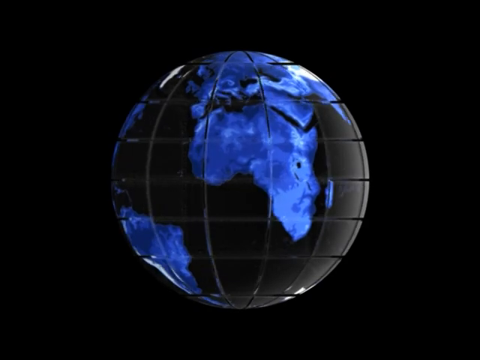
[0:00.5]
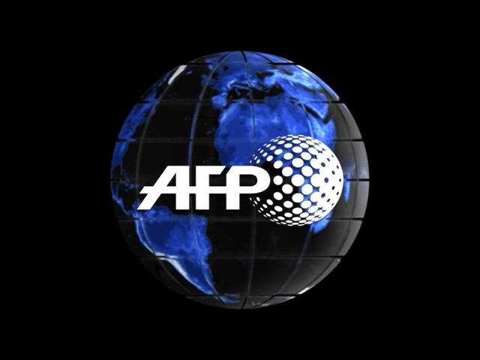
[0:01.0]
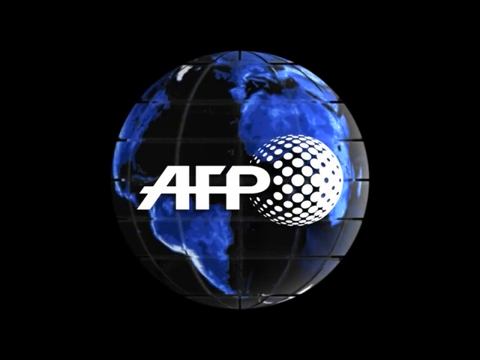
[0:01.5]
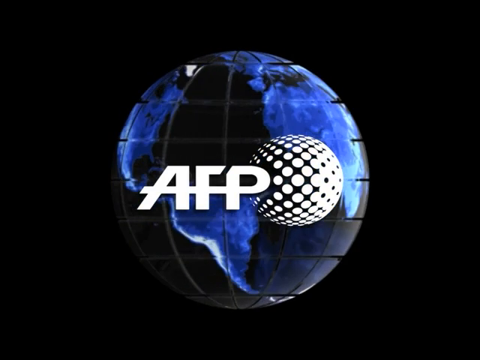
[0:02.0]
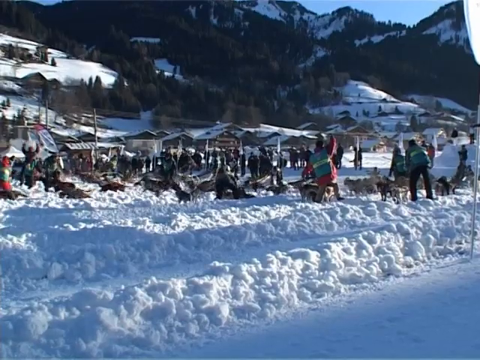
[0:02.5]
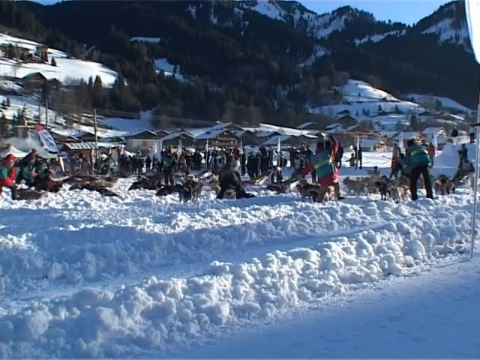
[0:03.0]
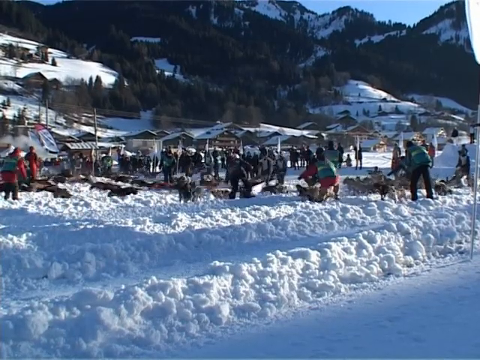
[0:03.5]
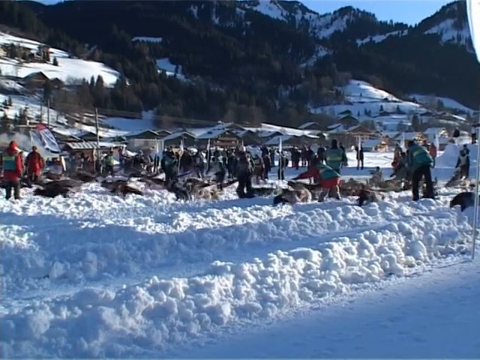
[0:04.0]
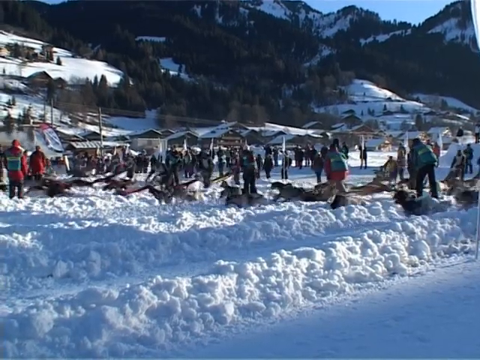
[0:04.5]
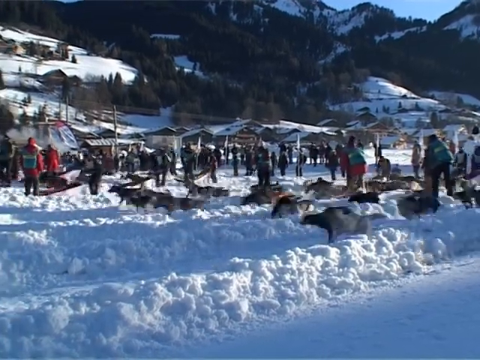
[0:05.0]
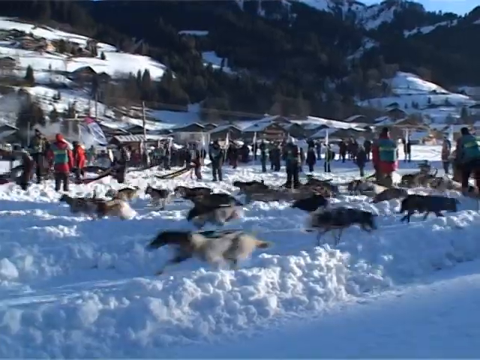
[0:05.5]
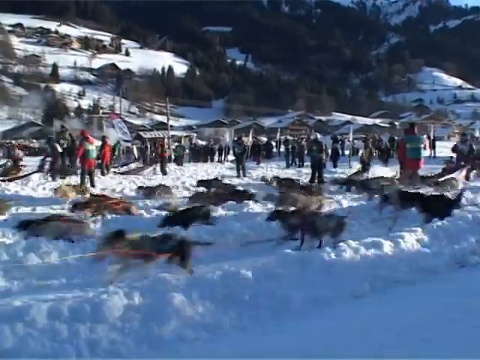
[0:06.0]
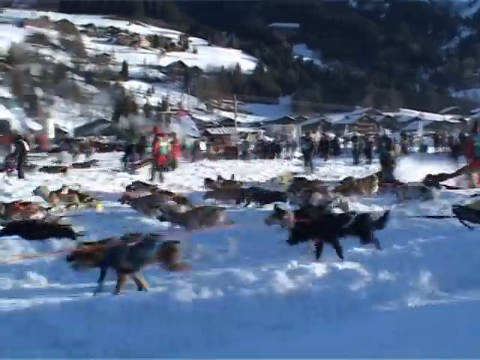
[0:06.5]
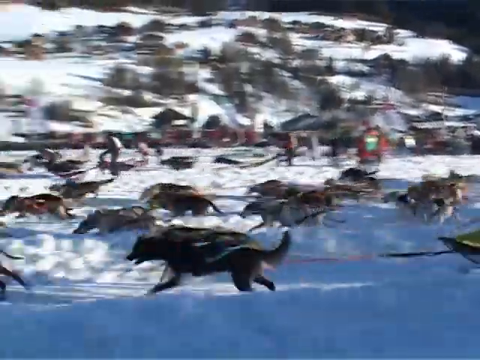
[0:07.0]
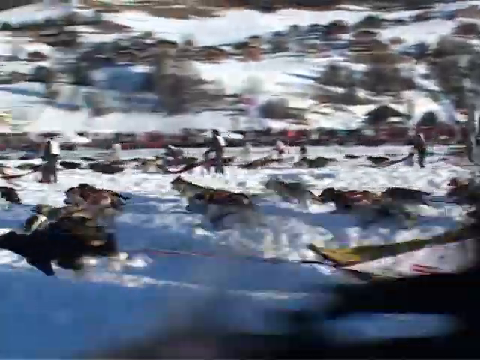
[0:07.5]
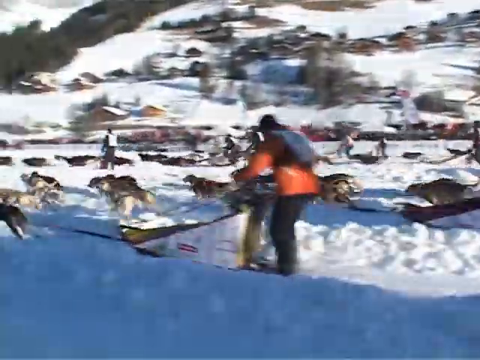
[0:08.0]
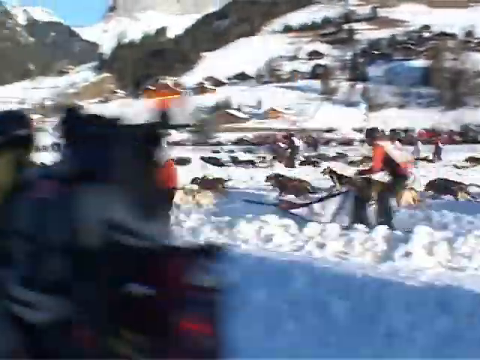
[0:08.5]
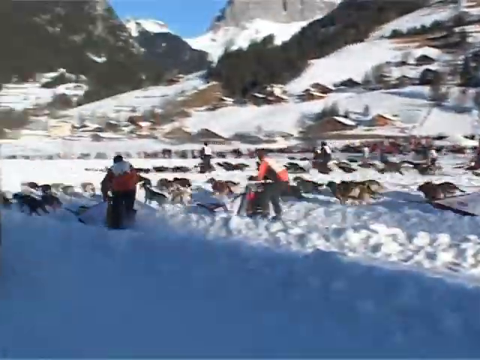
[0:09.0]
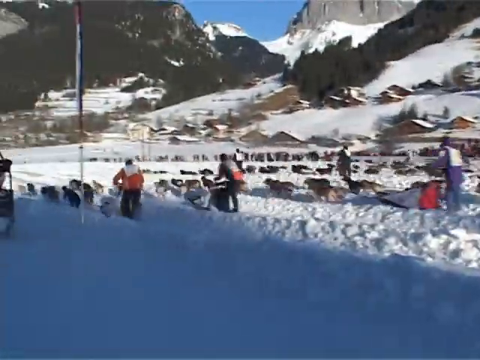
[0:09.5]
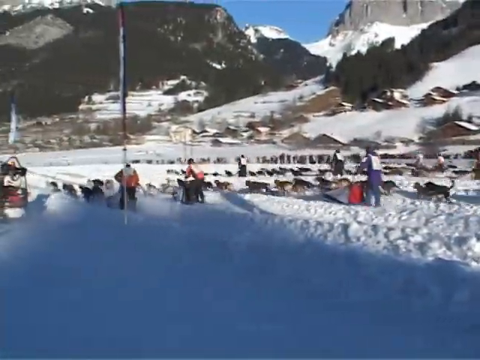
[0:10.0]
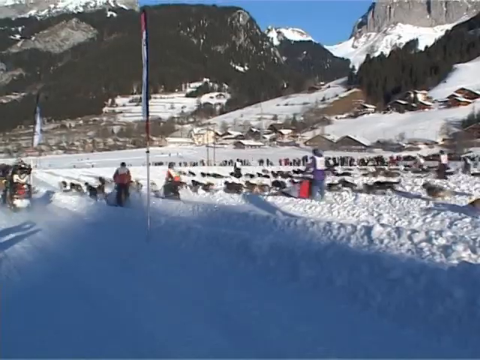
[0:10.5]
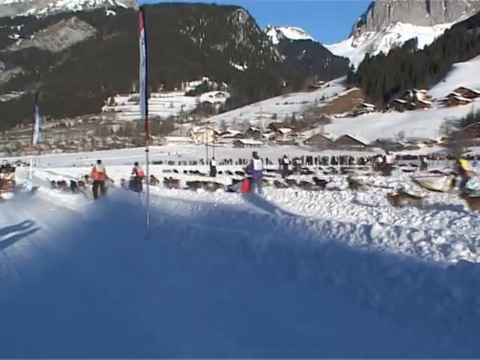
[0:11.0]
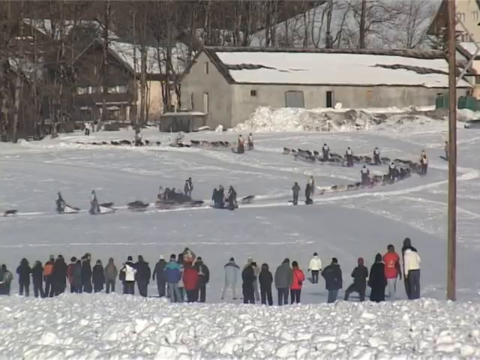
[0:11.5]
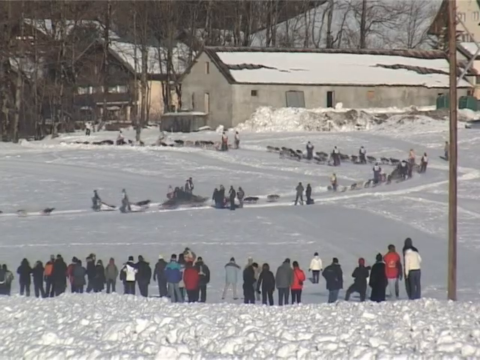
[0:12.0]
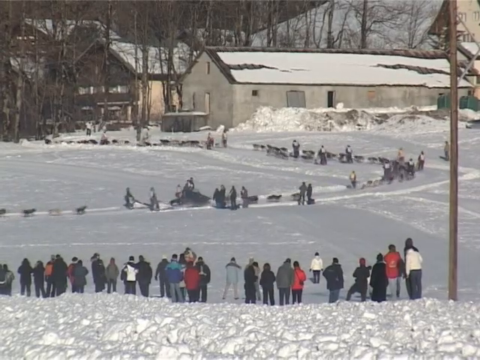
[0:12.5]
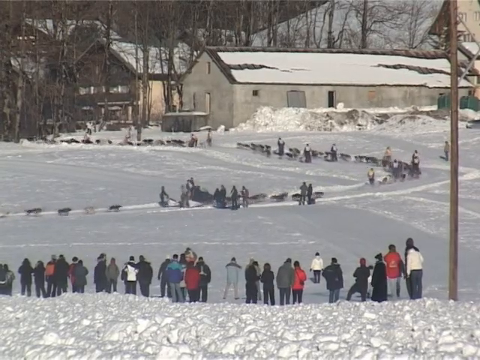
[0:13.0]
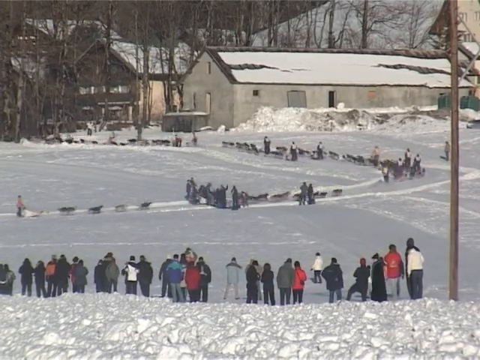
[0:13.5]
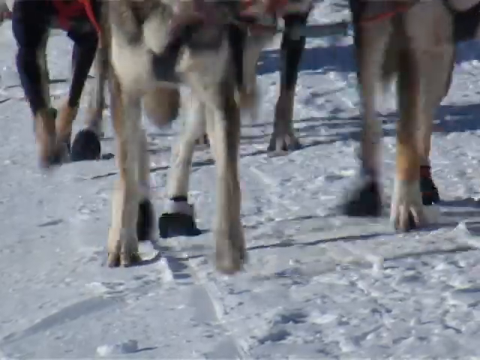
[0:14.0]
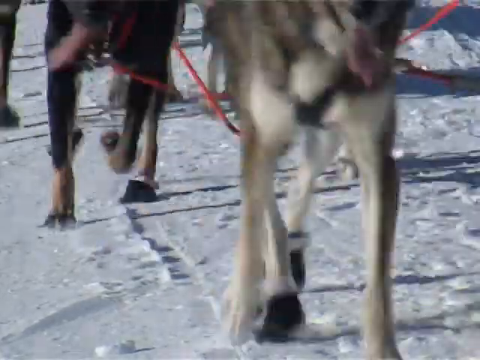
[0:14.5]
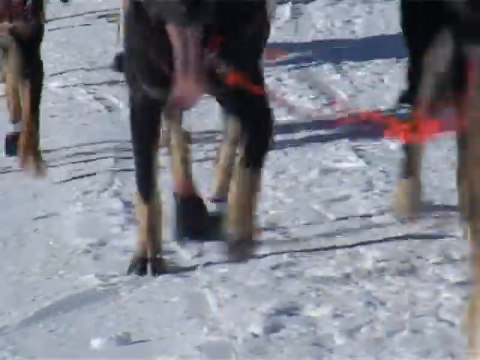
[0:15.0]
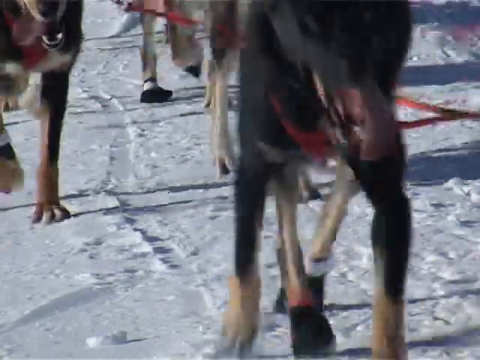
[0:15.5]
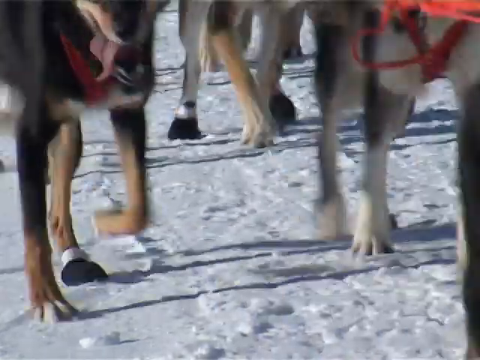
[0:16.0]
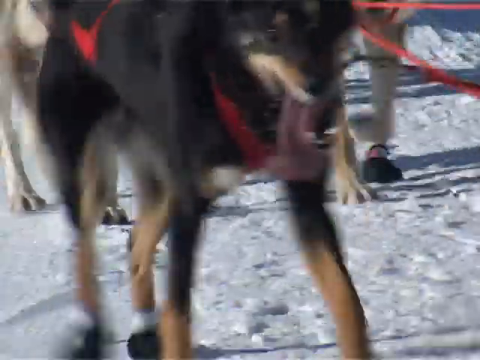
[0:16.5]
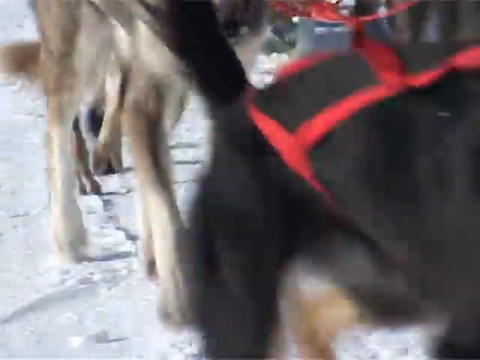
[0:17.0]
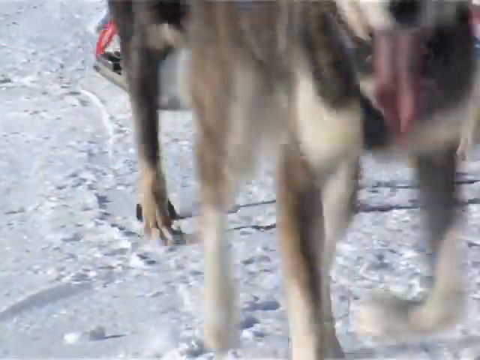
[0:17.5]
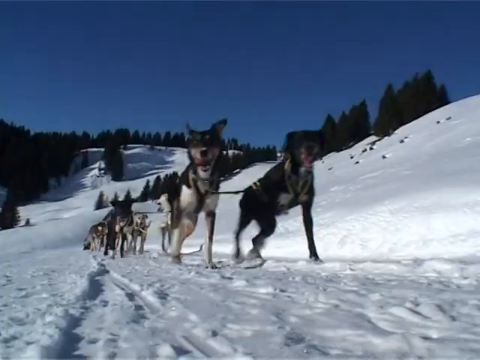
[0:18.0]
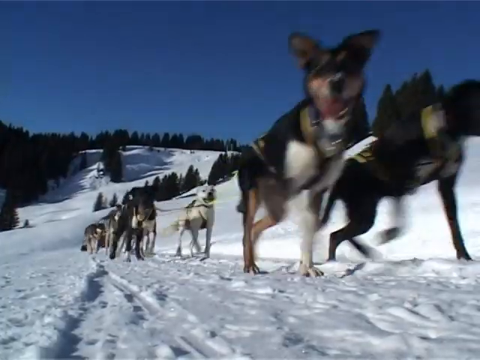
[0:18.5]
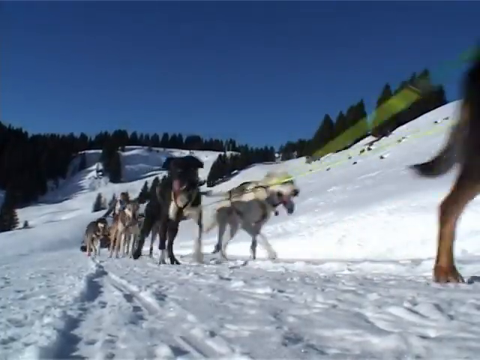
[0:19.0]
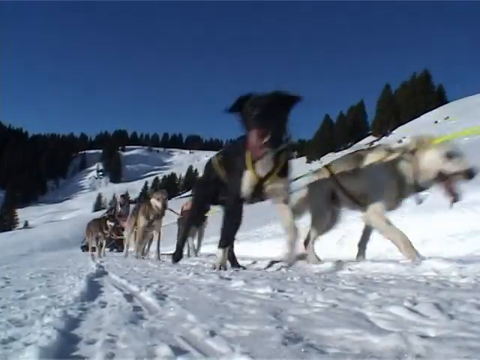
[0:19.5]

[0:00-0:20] The video opens on a large globe with blue landmasses and black water, with large white lettering reading "AFP" in front of it. The scene then changes to a snowy, mountainous landscape with many sled dogs and many sleds. It looks like a sled race between teams of dogs, with each person probably having eight to ten dogs, and a crowd has gathered to watch. Some of the dogs appear to have black shoes on: something black covers one leg on one or two of the dogs.